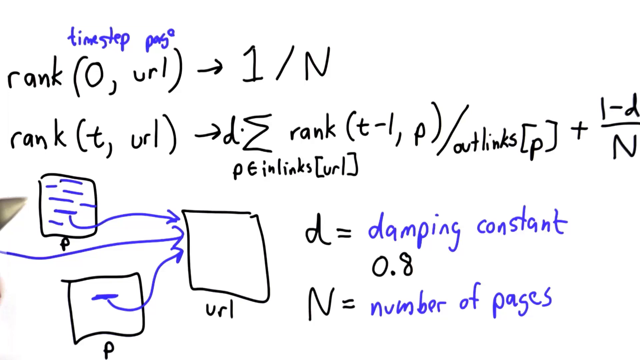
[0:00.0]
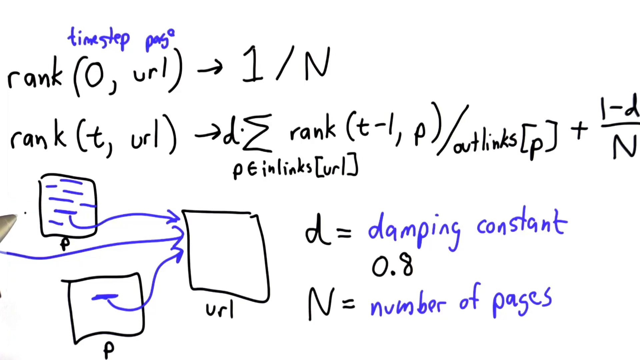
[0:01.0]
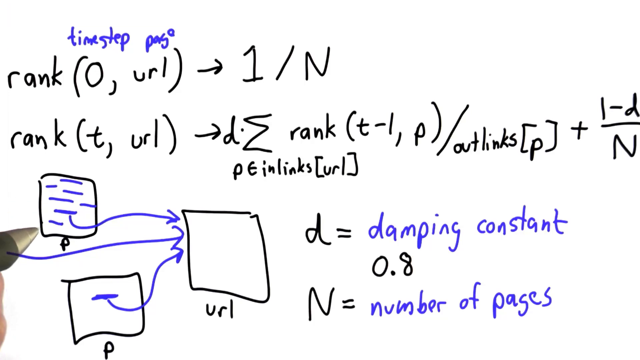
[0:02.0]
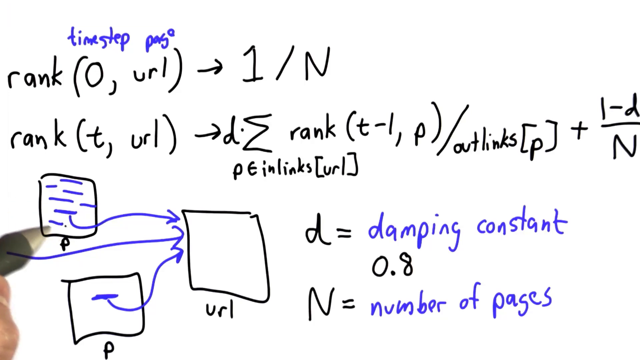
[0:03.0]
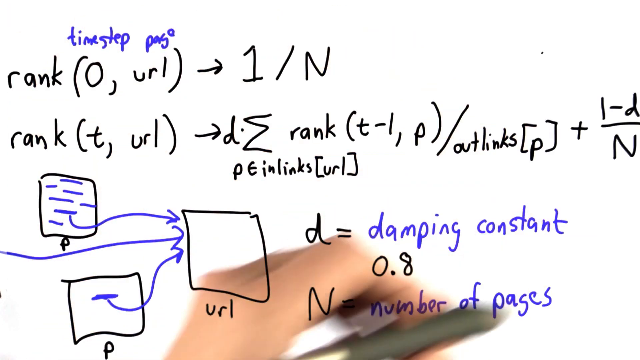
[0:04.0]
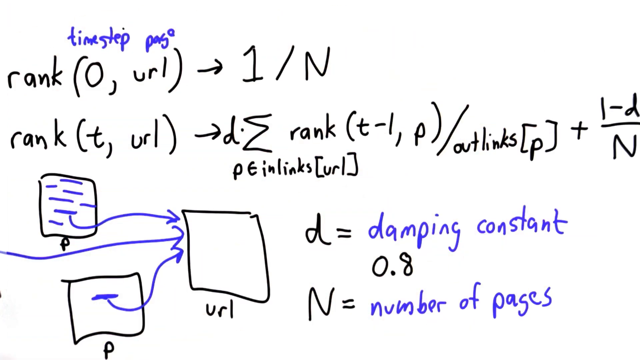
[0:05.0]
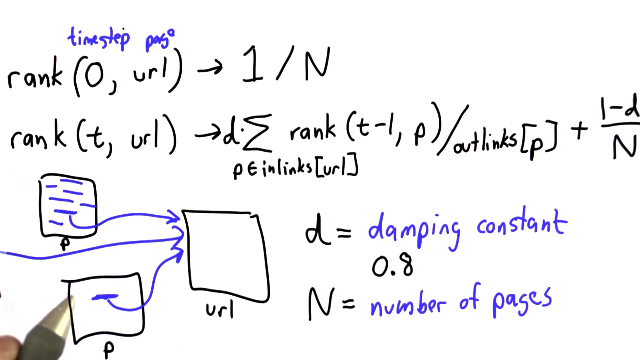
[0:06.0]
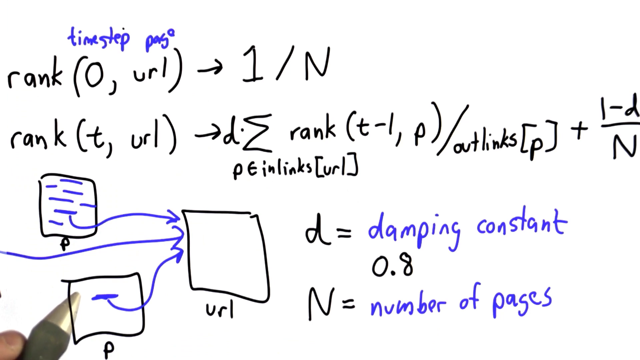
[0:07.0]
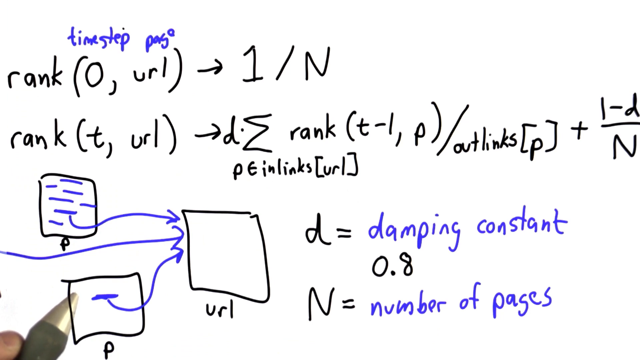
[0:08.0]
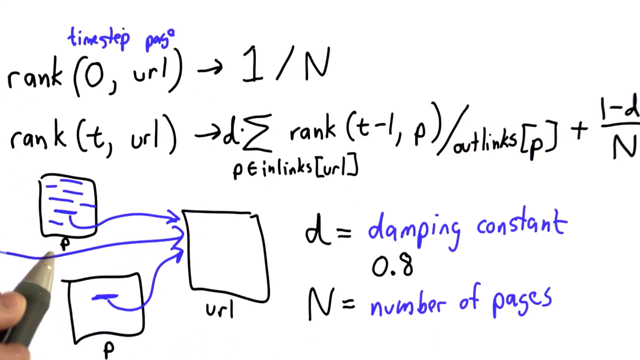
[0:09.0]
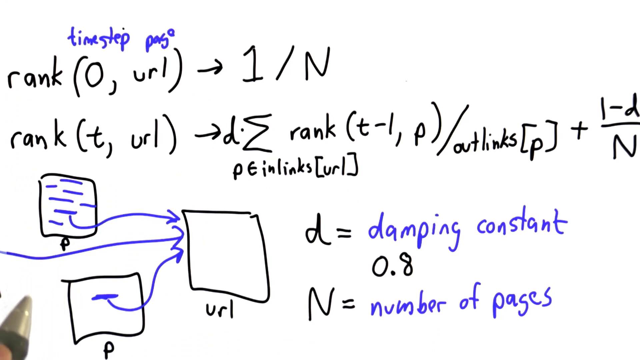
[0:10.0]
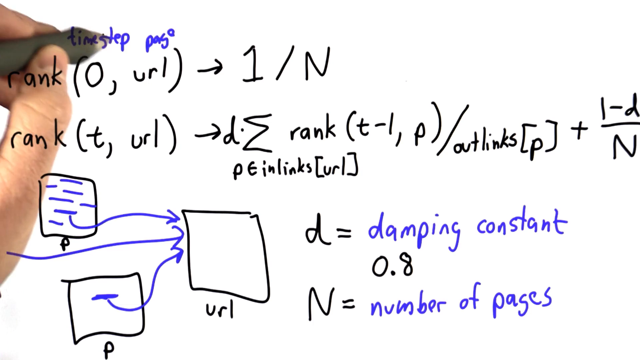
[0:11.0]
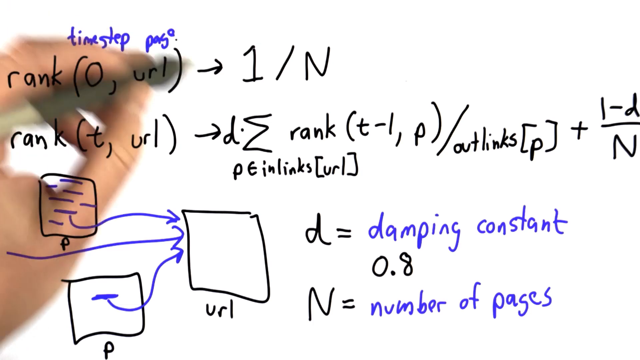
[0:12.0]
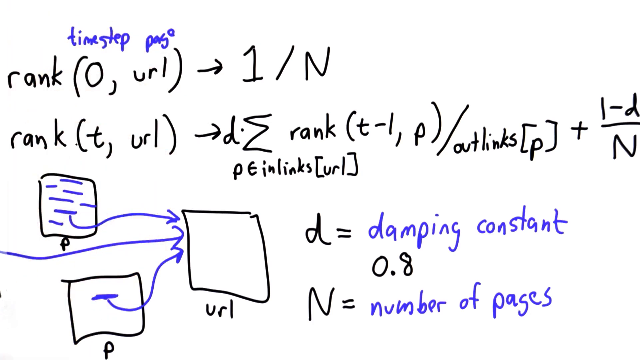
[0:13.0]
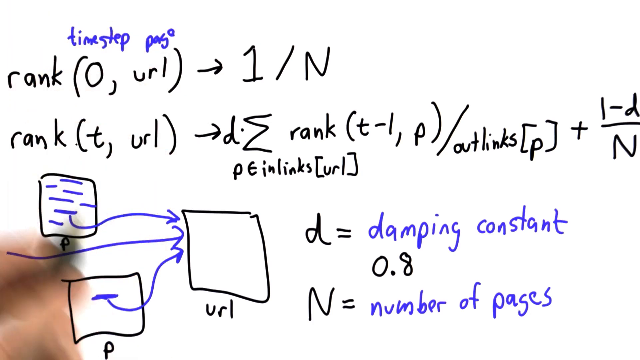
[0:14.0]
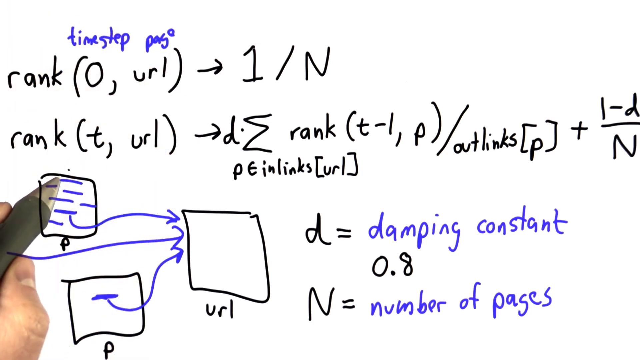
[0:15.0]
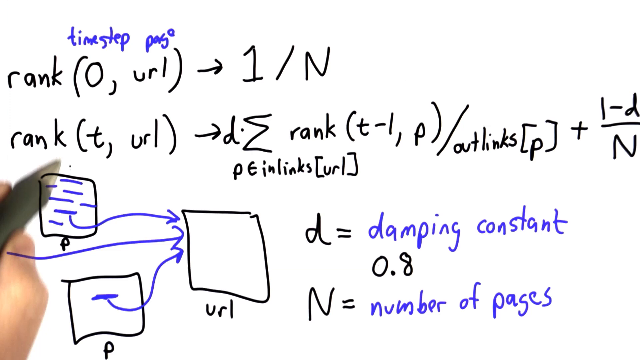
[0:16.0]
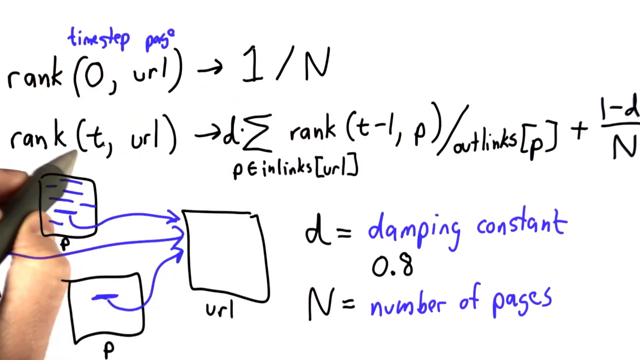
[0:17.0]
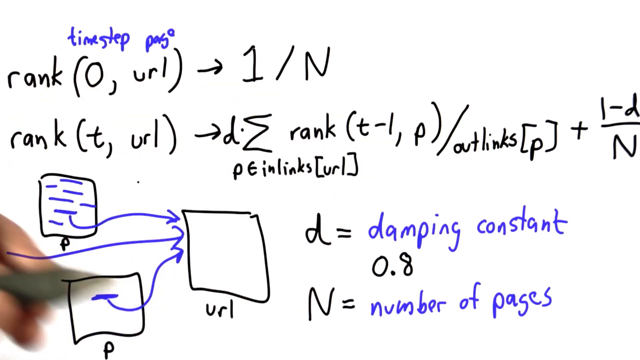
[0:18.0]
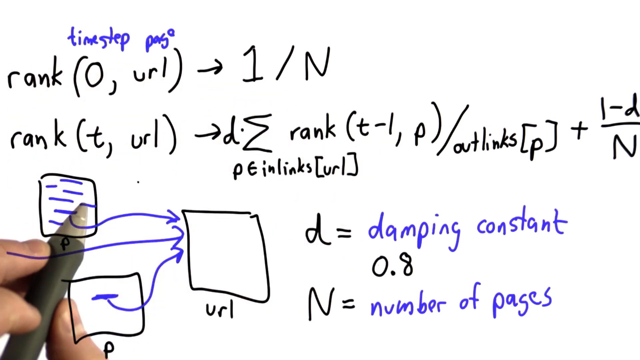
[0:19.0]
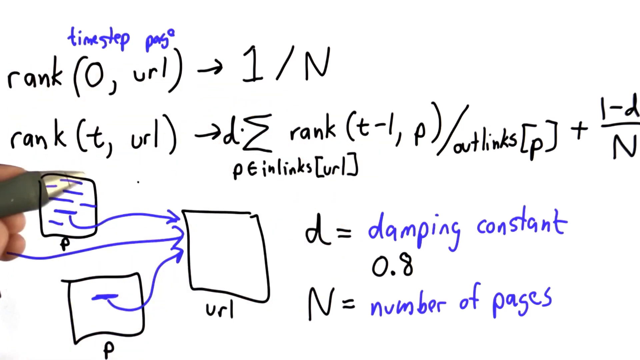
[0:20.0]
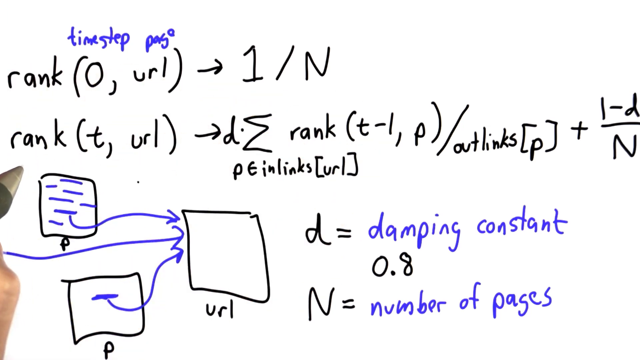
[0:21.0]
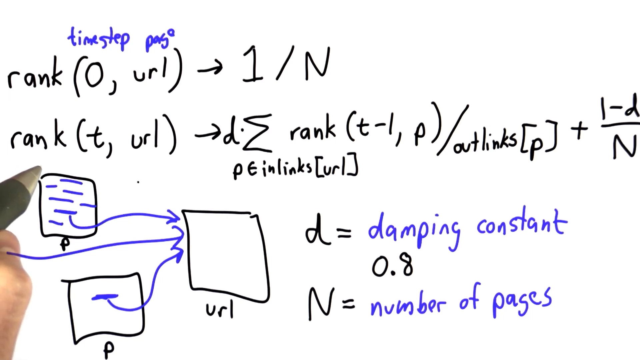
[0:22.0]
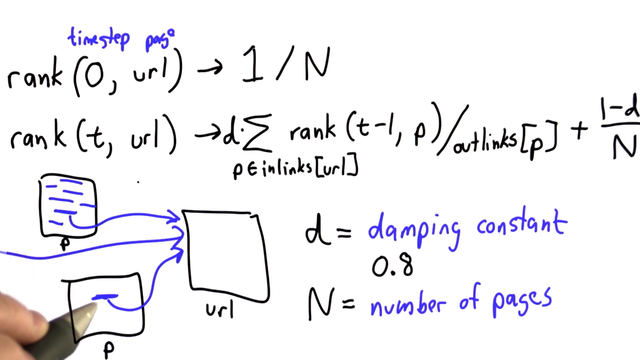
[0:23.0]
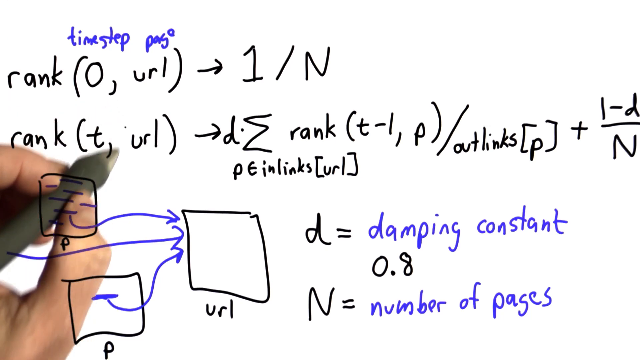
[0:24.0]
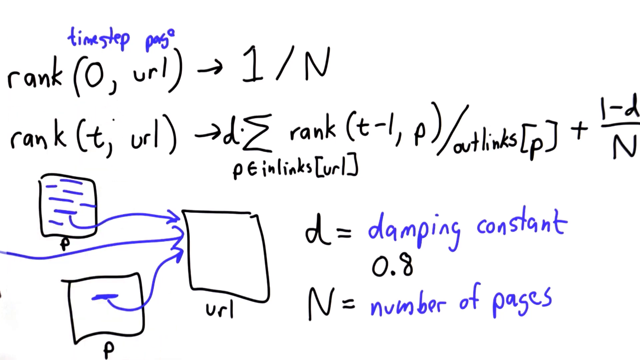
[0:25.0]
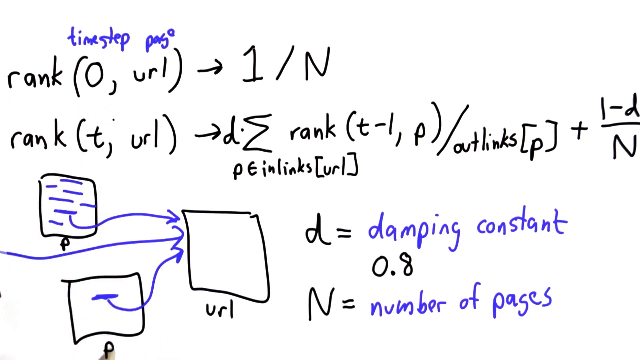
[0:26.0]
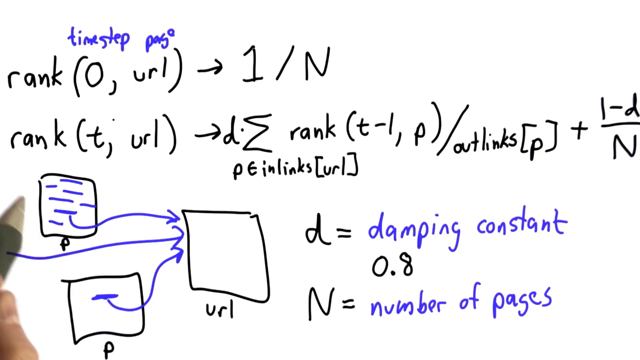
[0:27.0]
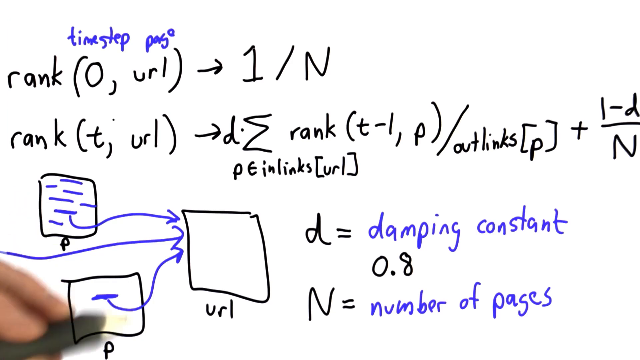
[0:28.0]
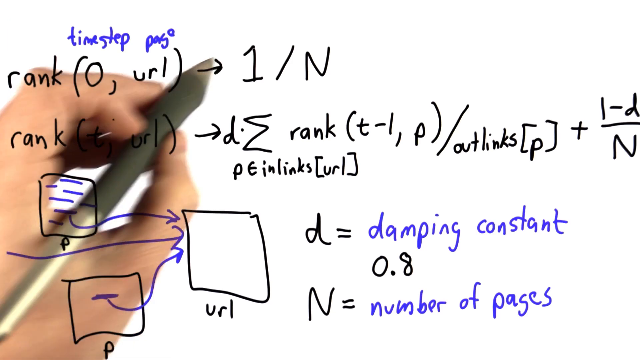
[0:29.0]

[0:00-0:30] A screen from an online video shows a person using a pen that works like a mouse pad to point out what is being shown, apparently an algorithm for something to be used later. Instructions are at the top, and in the center are two handwritten mathematical formulas. Below the formulas are drawings that seem to show text indicating it will become a URL, so the formula seems to relate to web pages. The letters are labeled with what each represents: D is the constant dumping and N is the number of pages. A URL result appears, coming from the crossing of two other items.